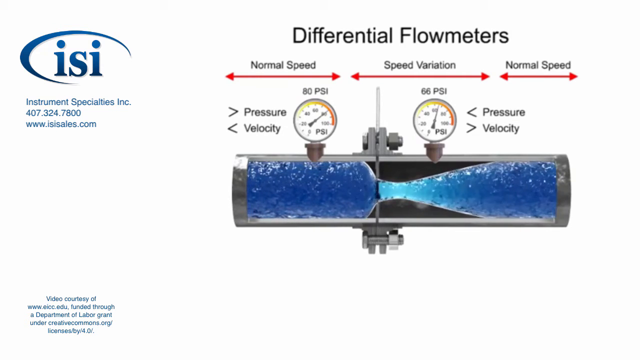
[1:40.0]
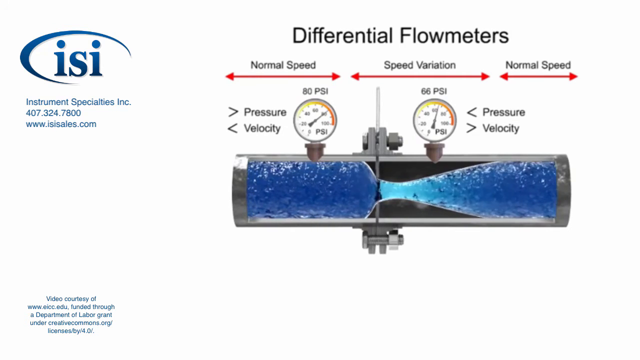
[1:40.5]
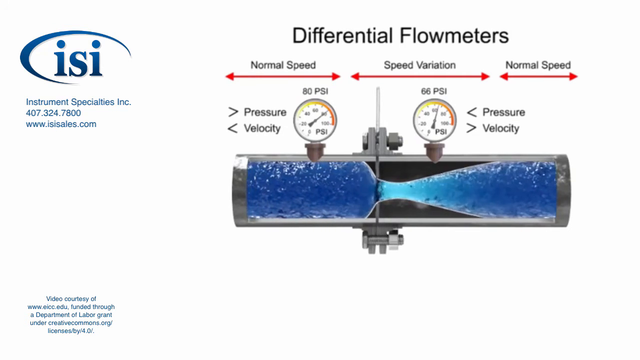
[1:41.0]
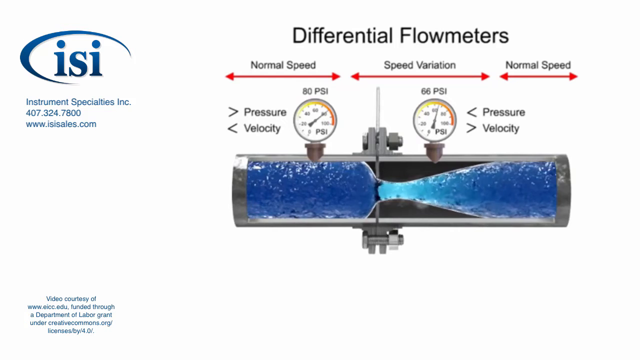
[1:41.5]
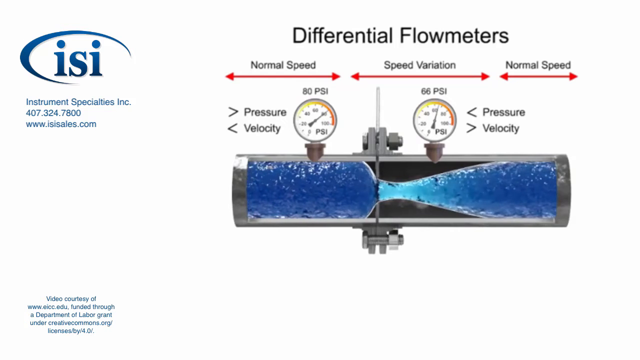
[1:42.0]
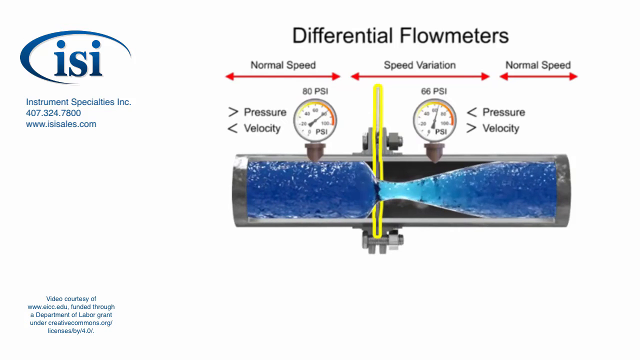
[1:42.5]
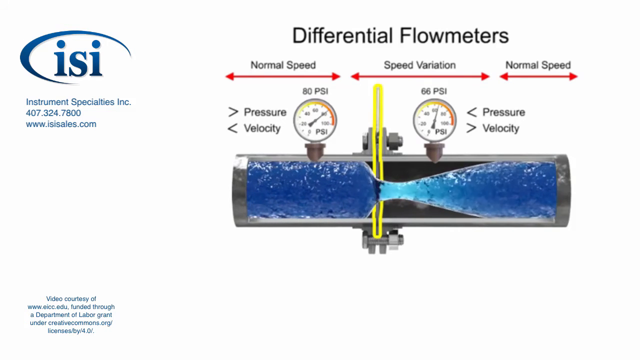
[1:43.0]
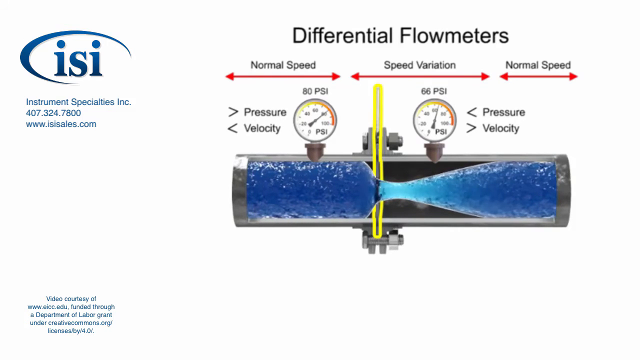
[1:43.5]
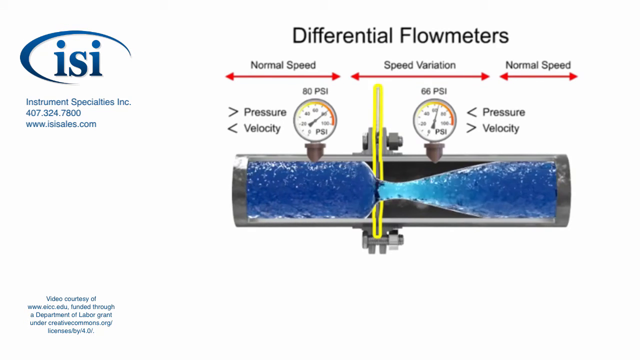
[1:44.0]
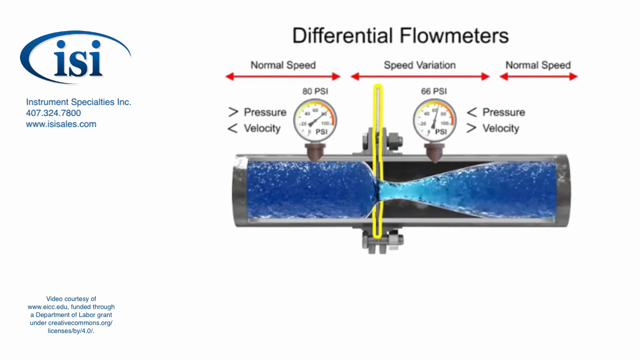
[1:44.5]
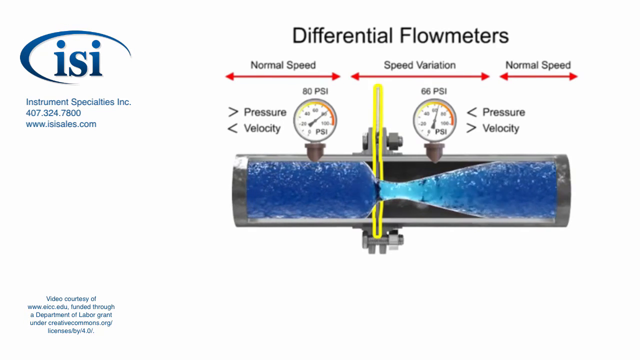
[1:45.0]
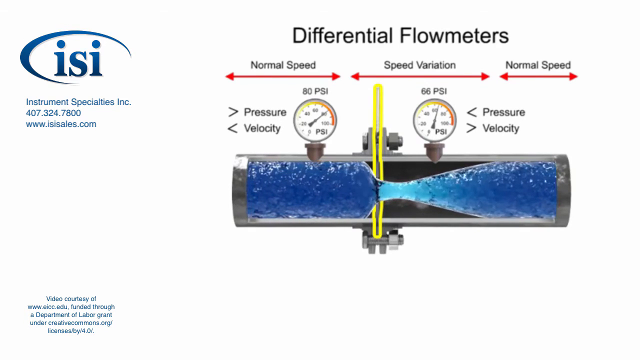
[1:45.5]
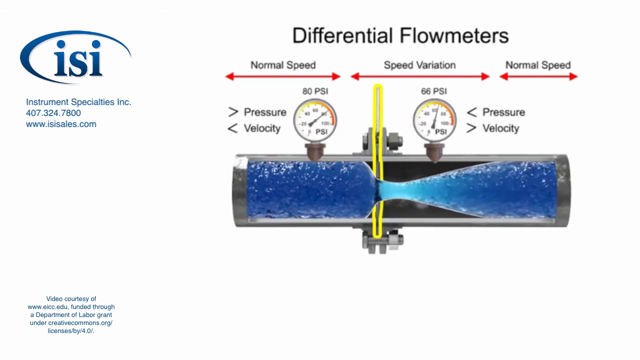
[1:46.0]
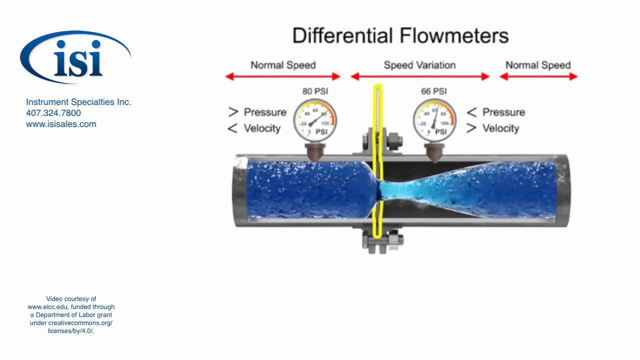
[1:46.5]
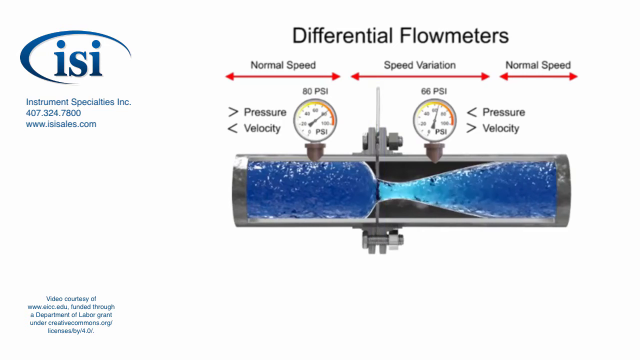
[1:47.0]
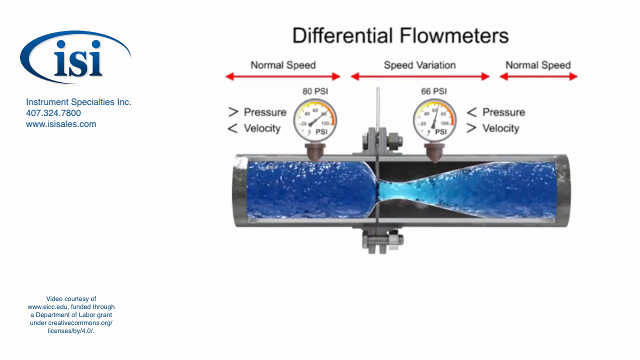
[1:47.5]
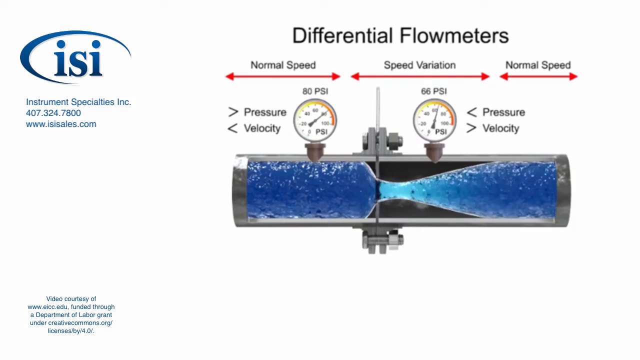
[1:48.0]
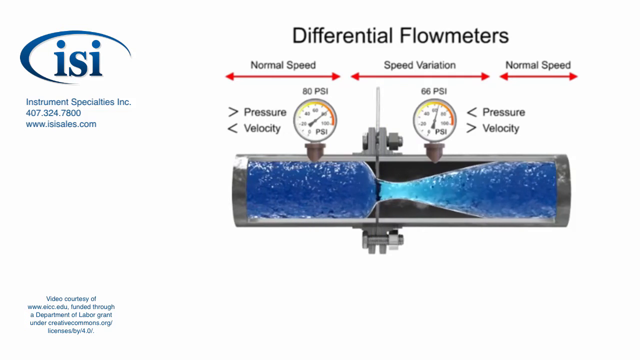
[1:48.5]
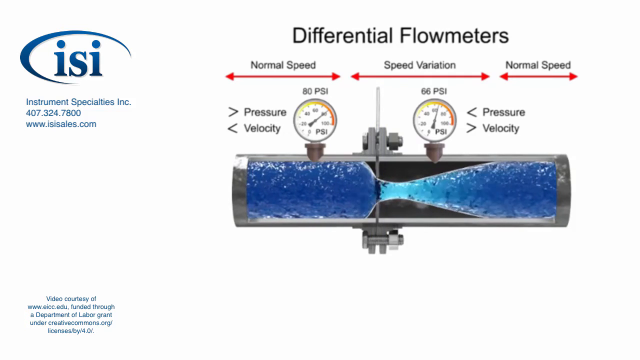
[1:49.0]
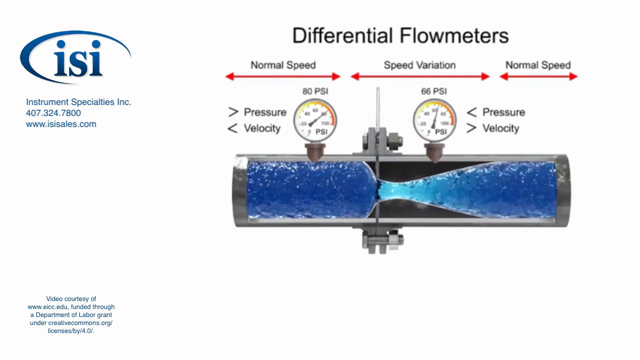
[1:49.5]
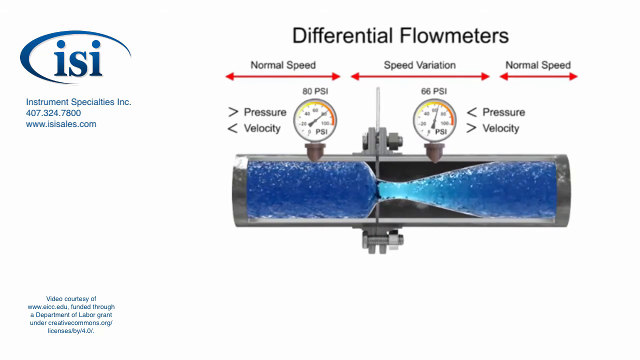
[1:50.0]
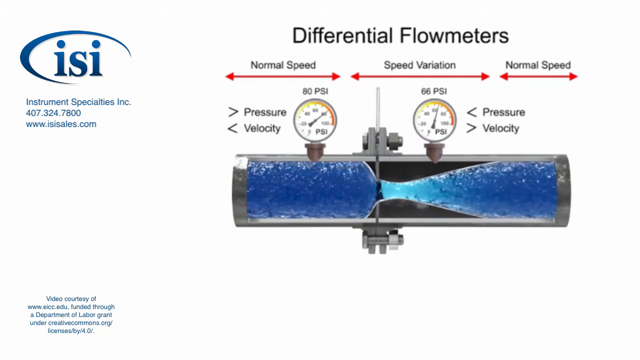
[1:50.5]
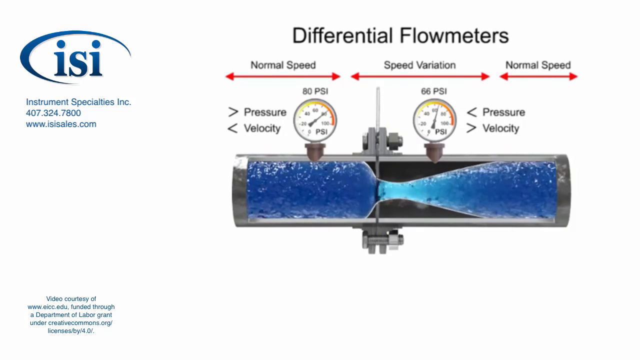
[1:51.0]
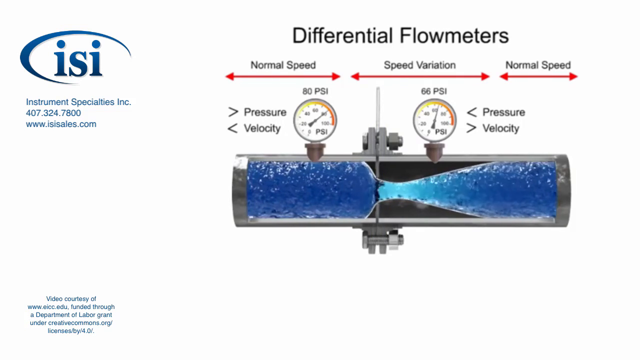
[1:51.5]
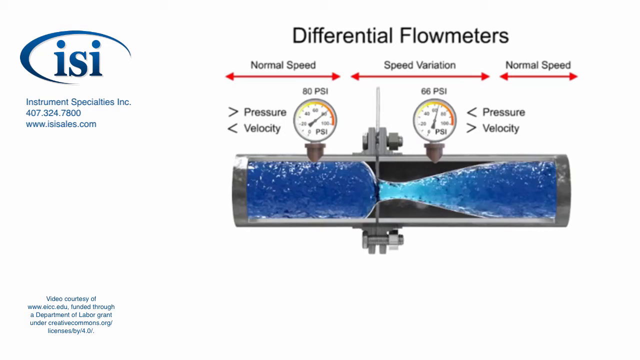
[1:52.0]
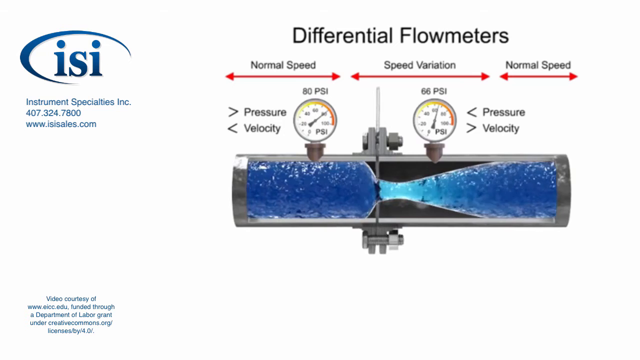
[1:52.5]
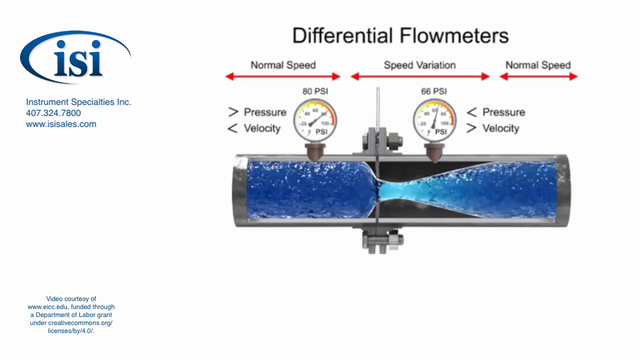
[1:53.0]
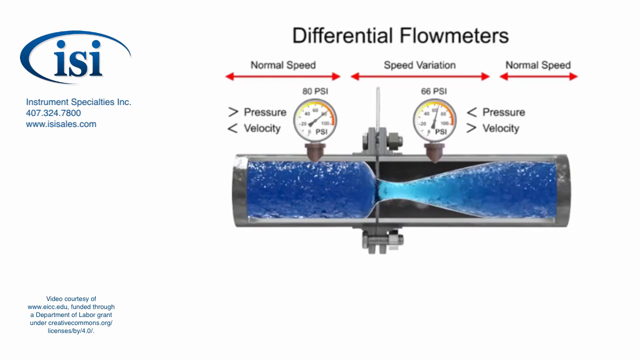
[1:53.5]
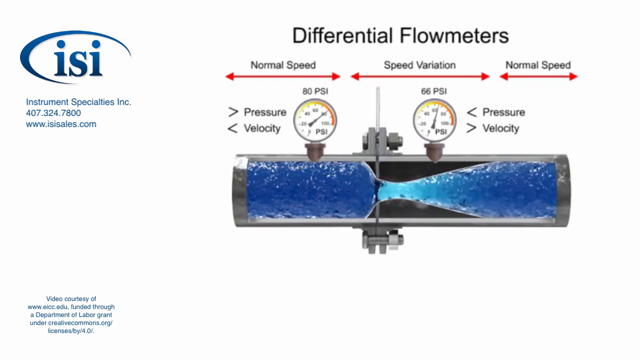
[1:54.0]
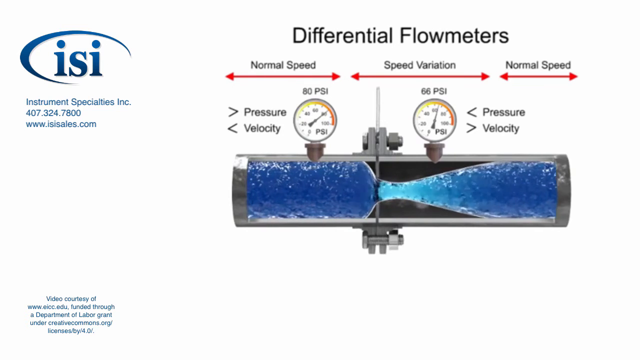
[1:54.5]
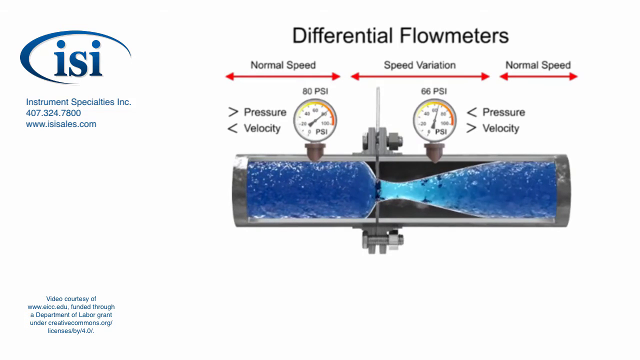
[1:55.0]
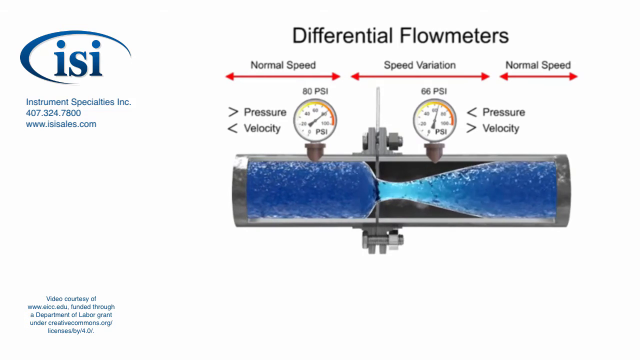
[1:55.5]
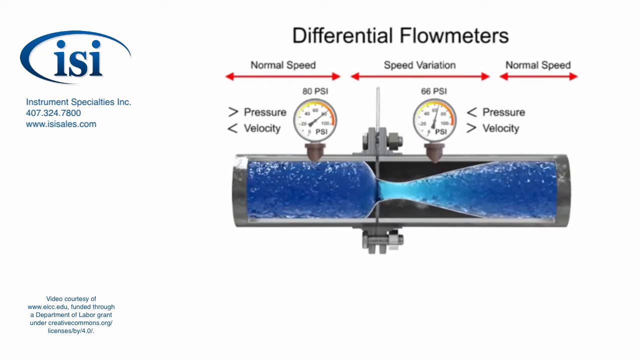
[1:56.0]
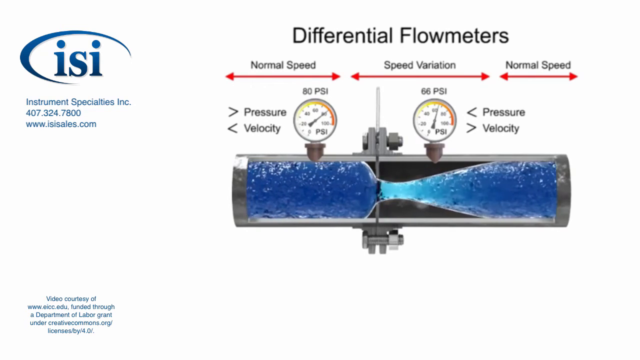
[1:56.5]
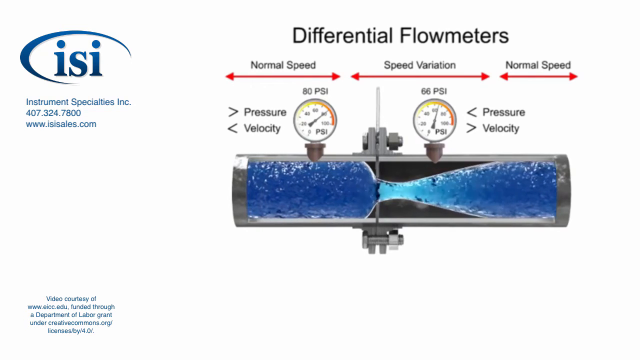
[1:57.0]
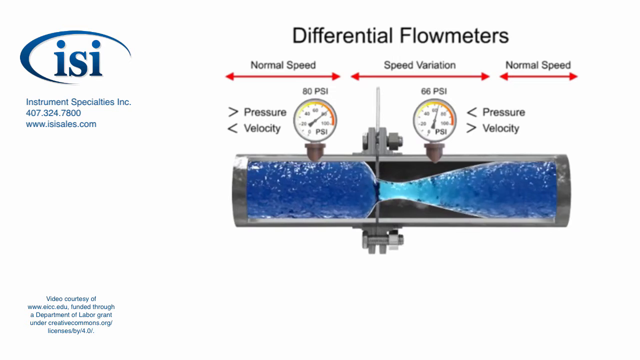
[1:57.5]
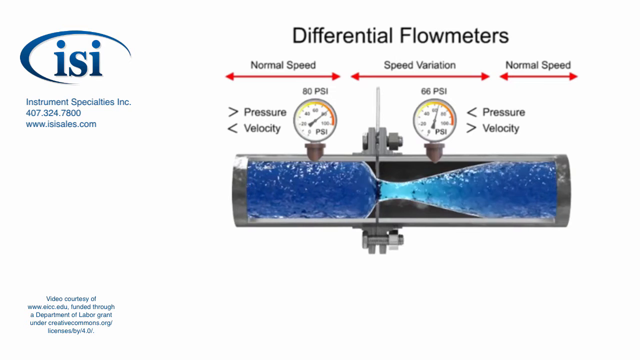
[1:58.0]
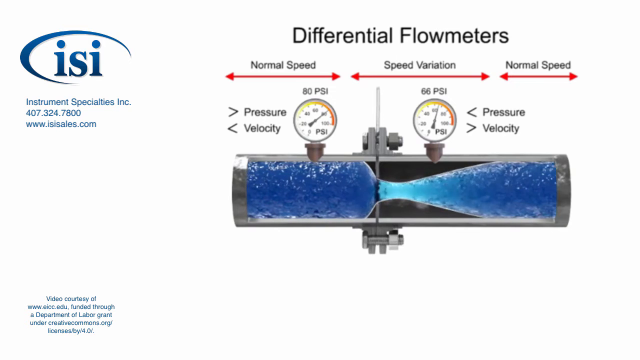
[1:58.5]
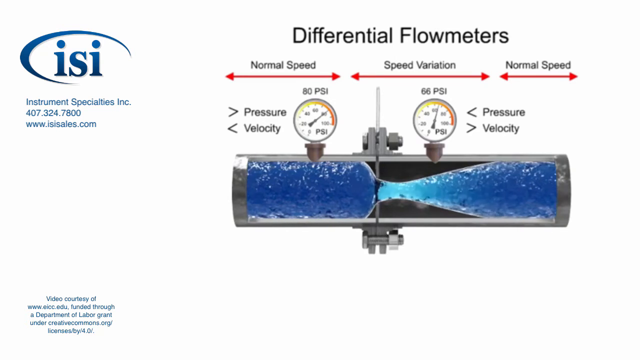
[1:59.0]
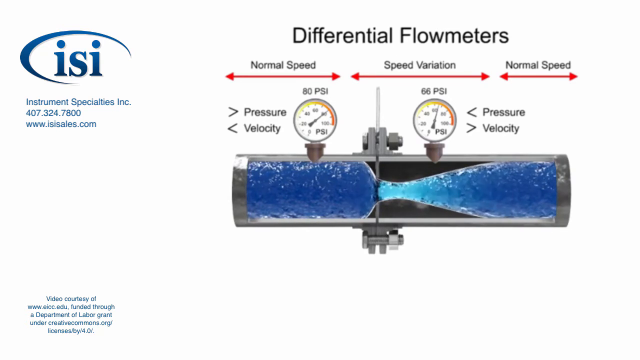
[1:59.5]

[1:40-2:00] An animation shows a pipe with its side cut out and water flowing through it. On top of the pipe are two gauges, one on the left and one on the right. Above the pipe it says "normal speed", "speed variation", "normal speed". Next to the gauge on the left are greater than pressure and less than velocity; to the right of the gauge on the right are less than pressure and greater than velocity. The water flows through the pipe and speeds up in the center. Then a rectangle appears in the center of the pipe, highlighting the flange and how it decreases the space in the pipe. "66 PSI" is above the gauge on the right and "80 PSI" is above the gauge on the left.